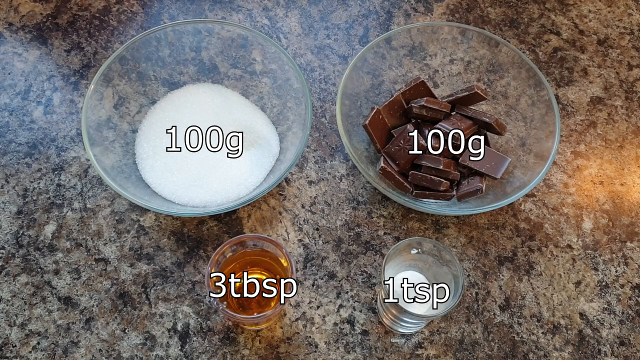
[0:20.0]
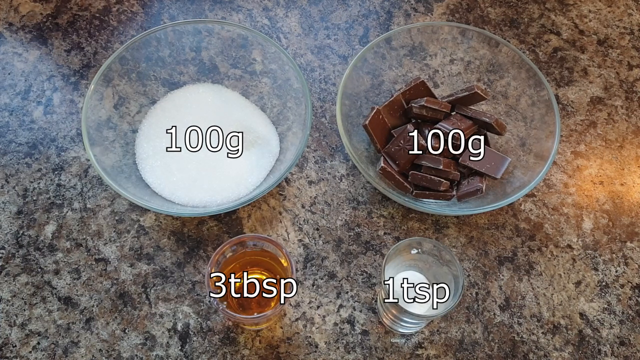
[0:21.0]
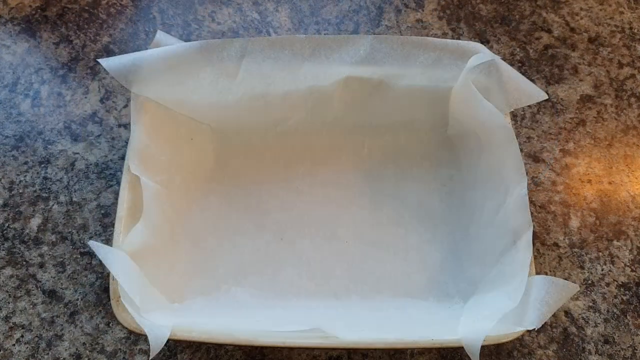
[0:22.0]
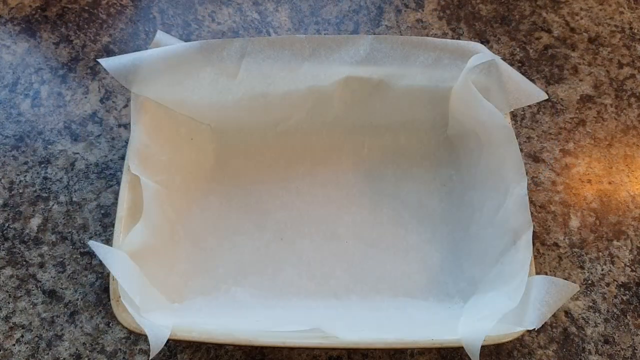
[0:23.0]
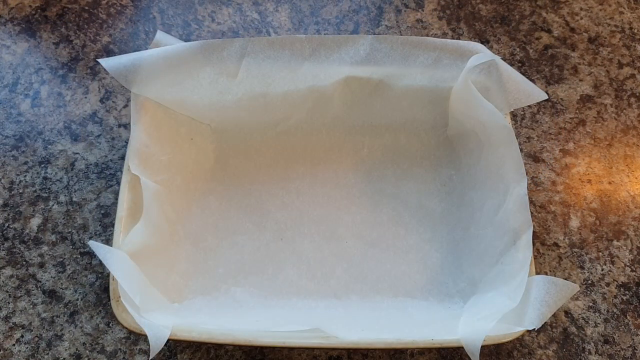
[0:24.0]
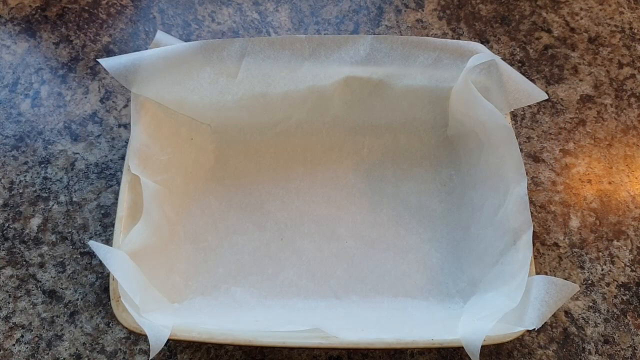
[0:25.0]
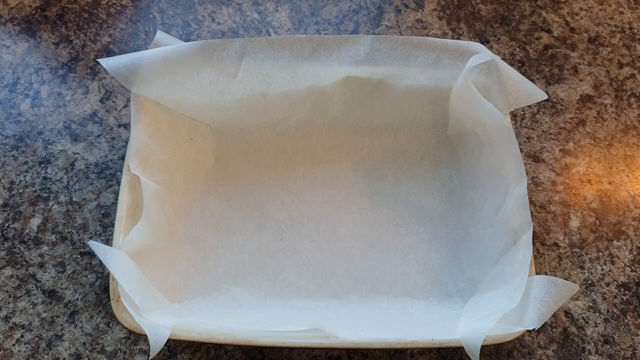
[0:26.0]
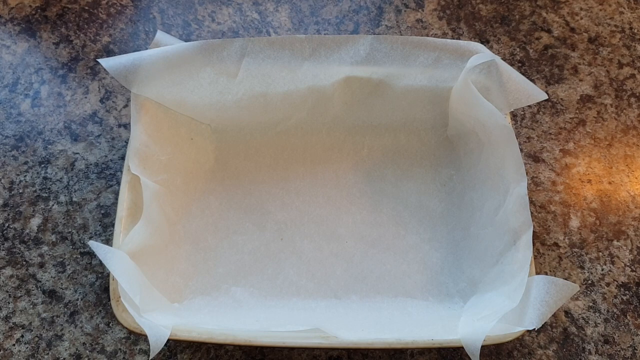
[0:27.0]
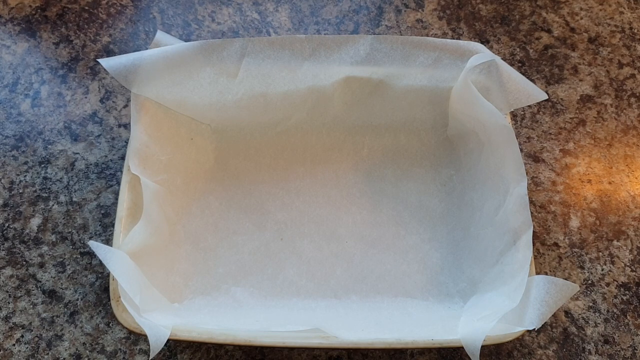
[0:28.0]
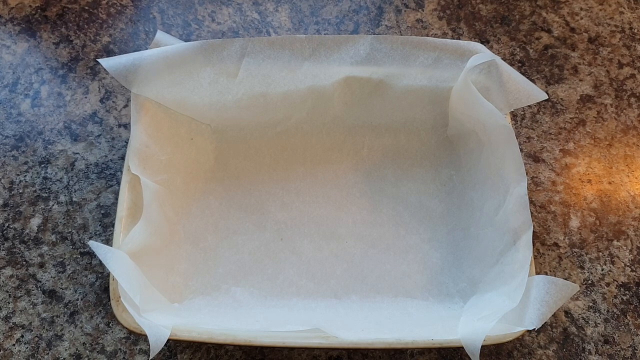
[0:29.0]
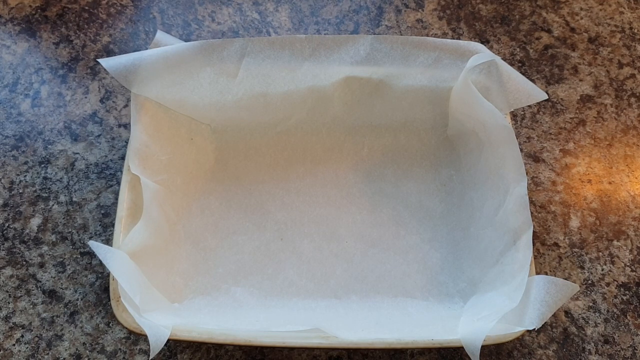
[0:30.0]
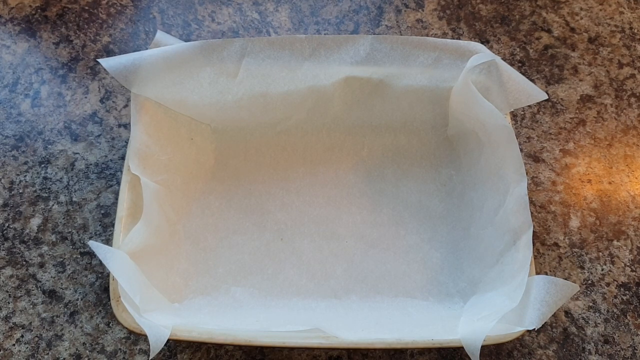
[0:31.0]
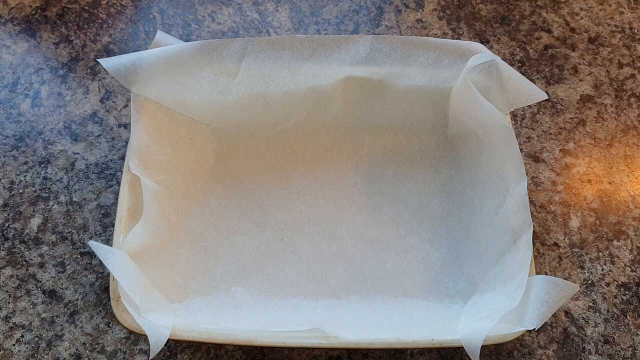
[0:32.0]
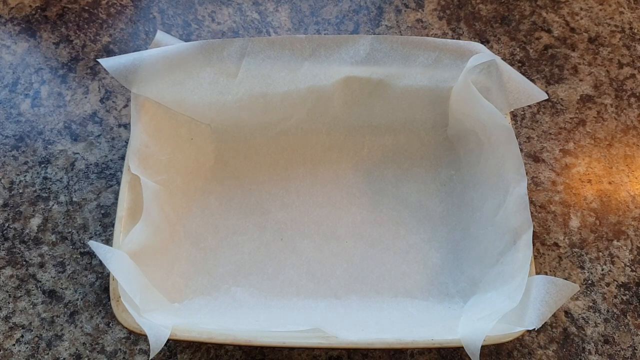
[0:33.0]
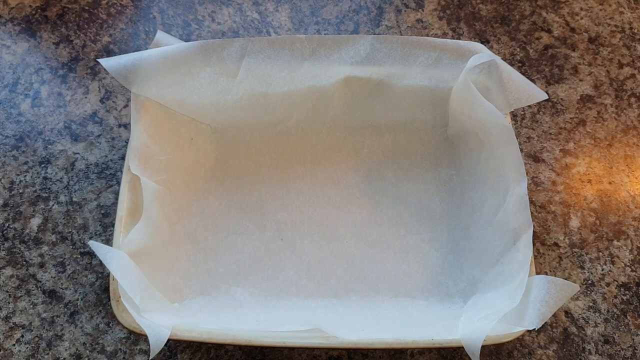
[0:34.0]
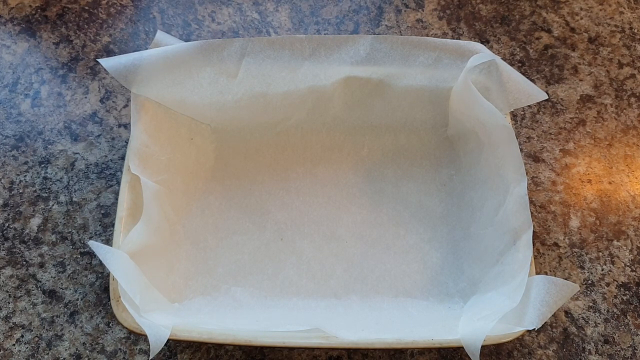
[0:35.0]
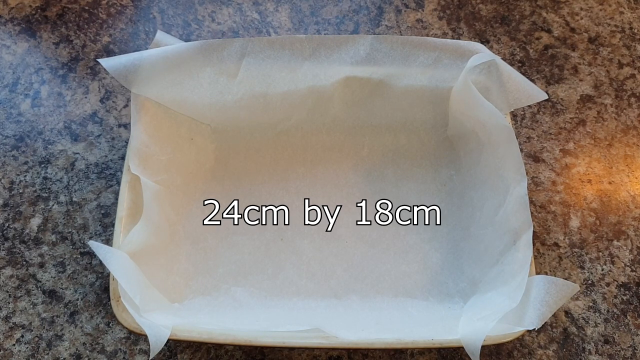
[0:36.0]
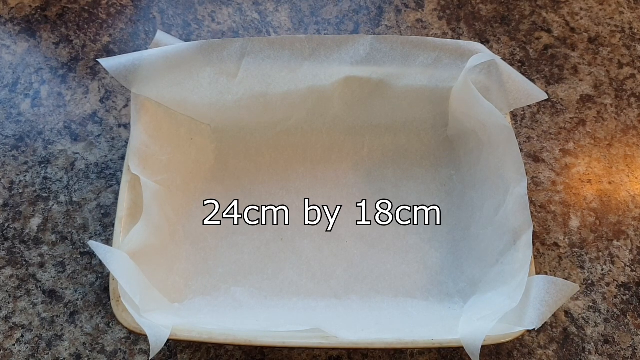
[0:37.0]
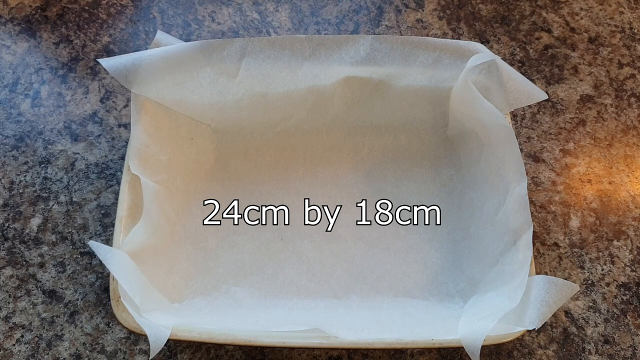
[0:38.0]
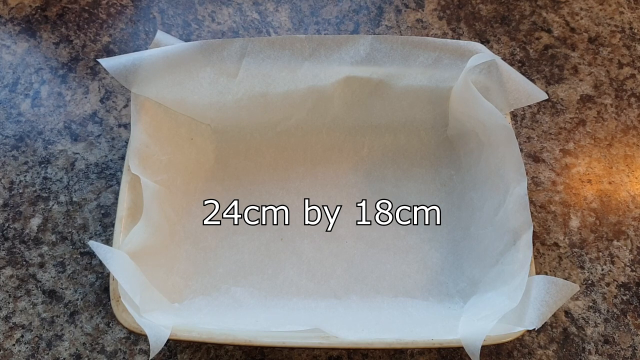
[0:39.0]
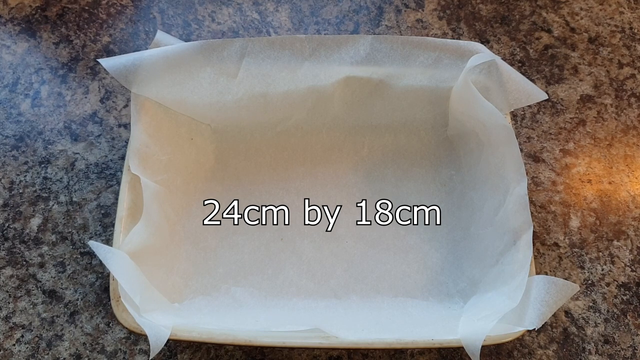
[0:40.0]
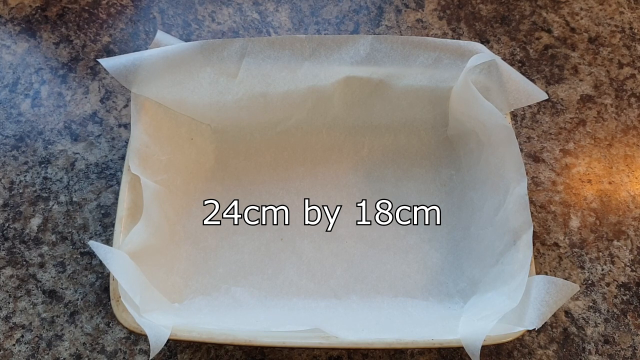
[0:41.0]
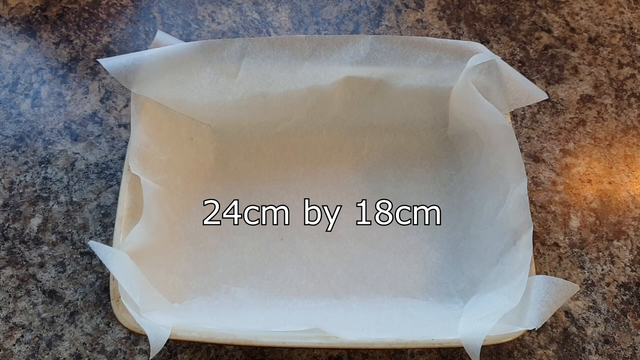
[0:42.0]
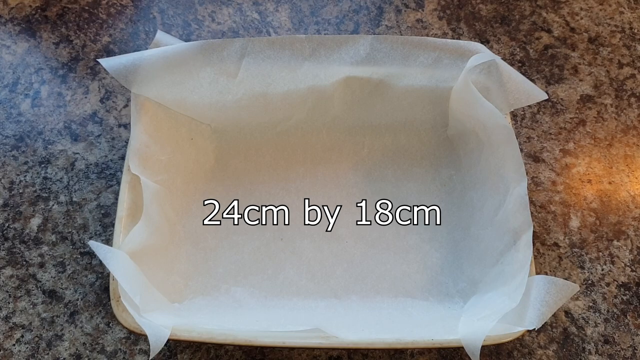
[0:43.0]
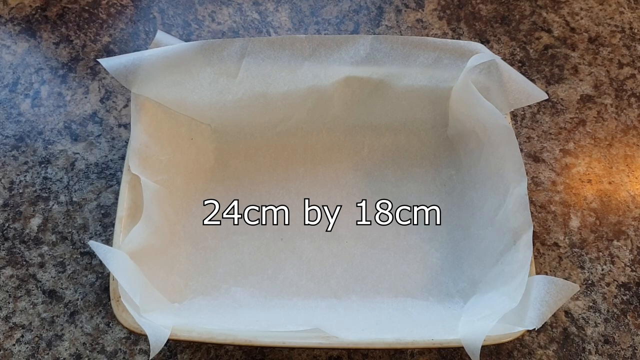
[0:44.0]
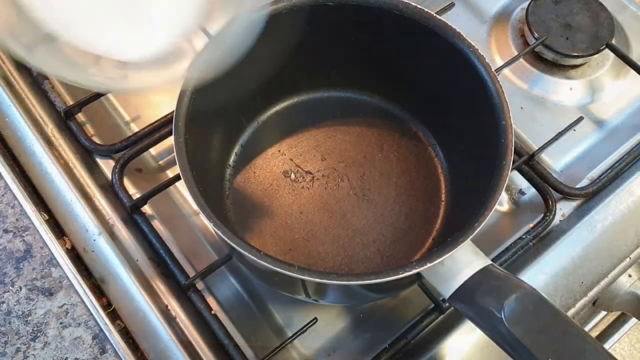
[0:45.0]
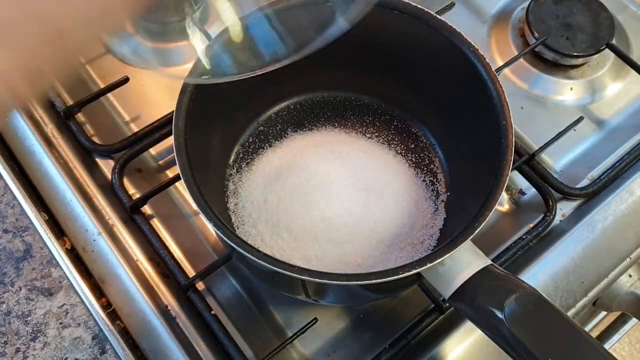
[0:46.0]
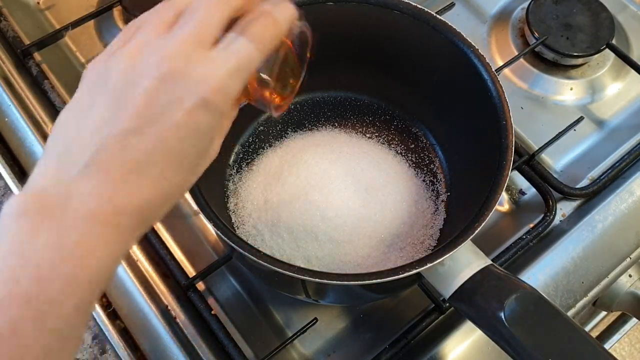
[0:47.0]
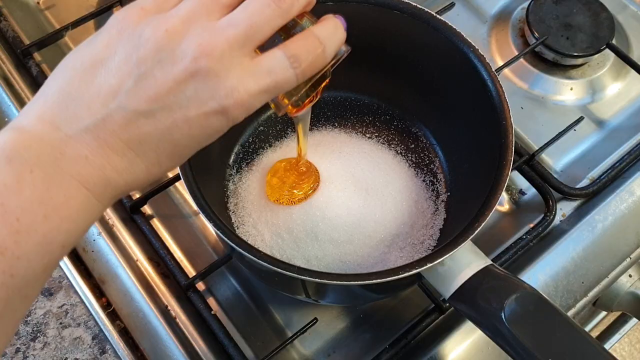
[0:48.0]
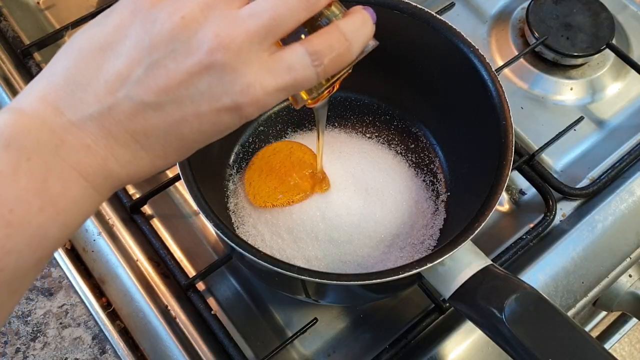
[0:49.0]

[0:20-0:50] The image of the four ingredients in separate bowls is shown, then it transitions to an image of a baking pan lined with parchment paper. After a few seconds, text appears over it reading "24 centimeter by 18 centimeter" in a white font with a black outline, presumably indicating the size of the pan. The video then cuts to footage of an empty pot on a stove. A hand enters the frame with a small bowl of what is possibly sugar and pours it into the pot. The hand then reaches in with a small container of what looks like honey and pours it on top of the sugar; it slowly drizzles out of the container. Very briefly, they start to mix it with a metal whisk.